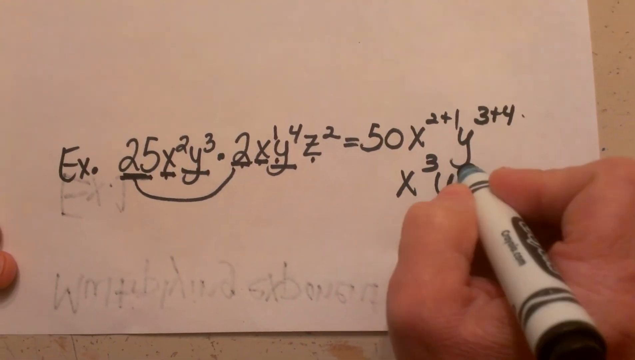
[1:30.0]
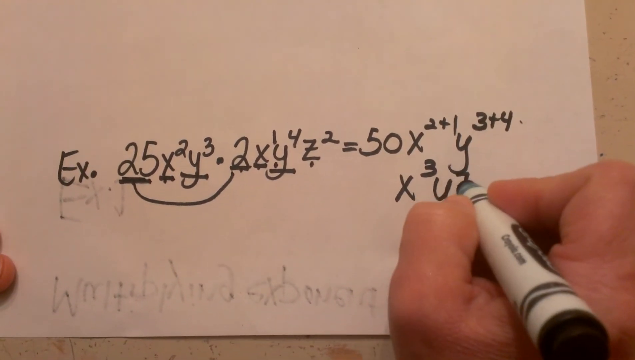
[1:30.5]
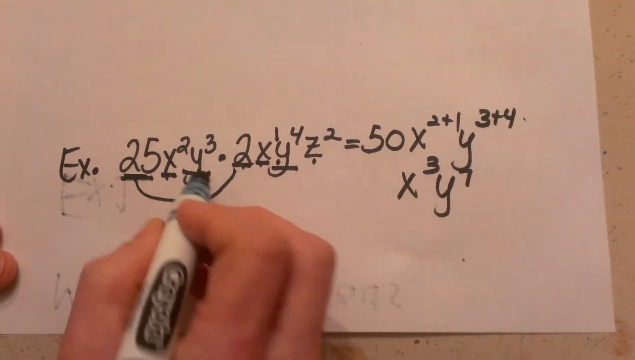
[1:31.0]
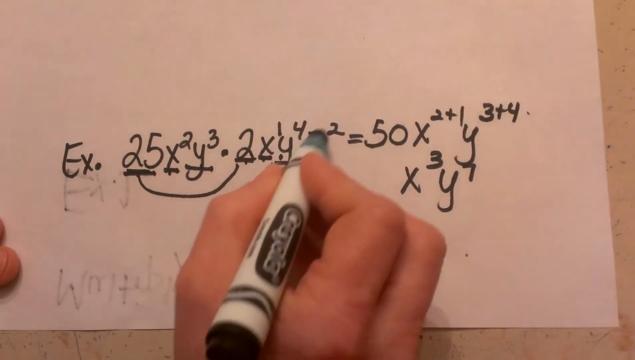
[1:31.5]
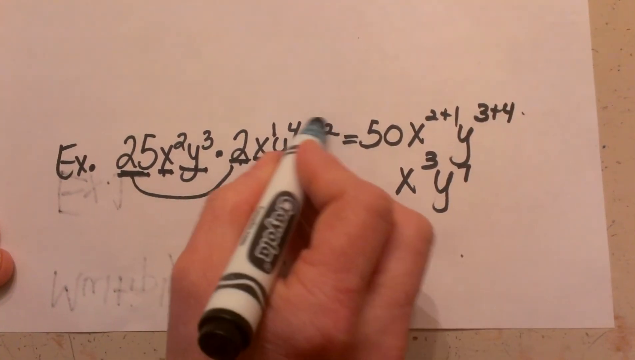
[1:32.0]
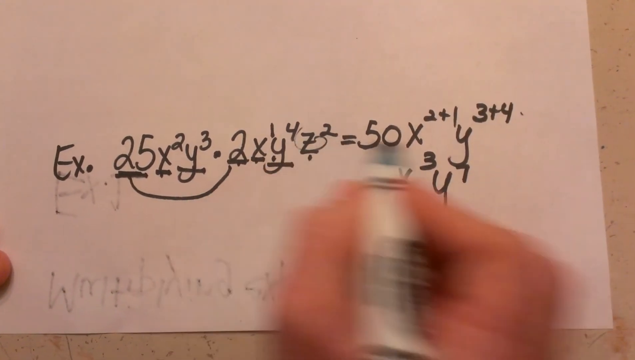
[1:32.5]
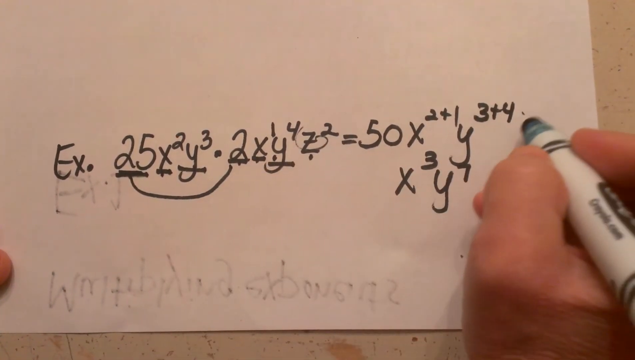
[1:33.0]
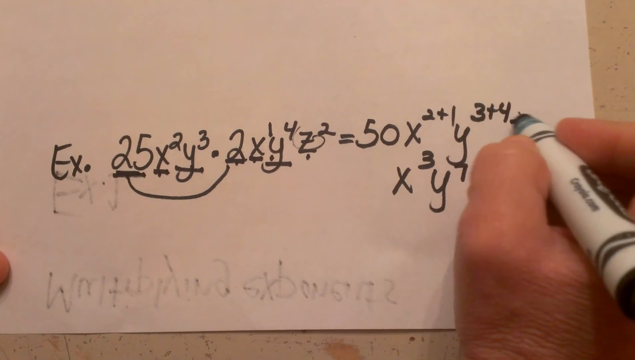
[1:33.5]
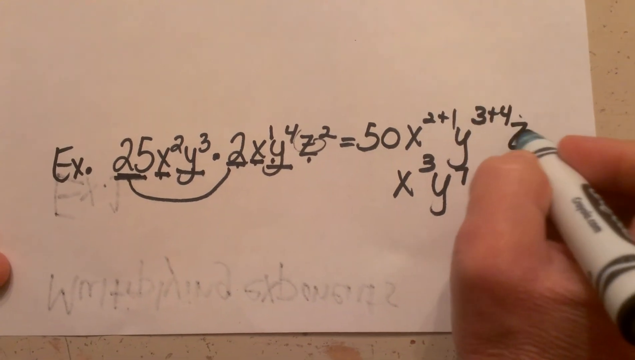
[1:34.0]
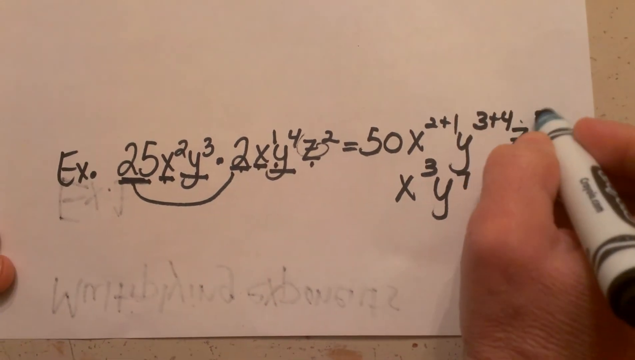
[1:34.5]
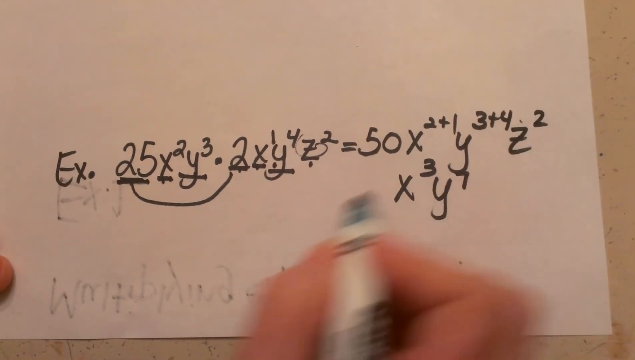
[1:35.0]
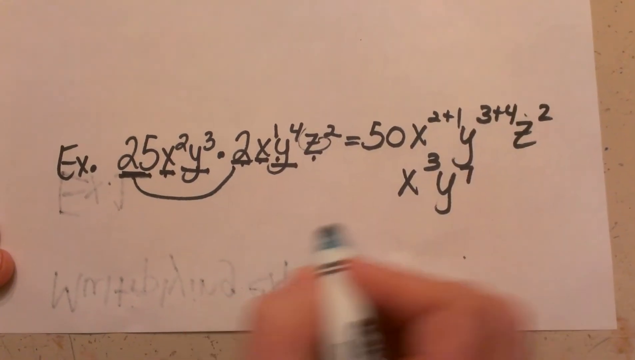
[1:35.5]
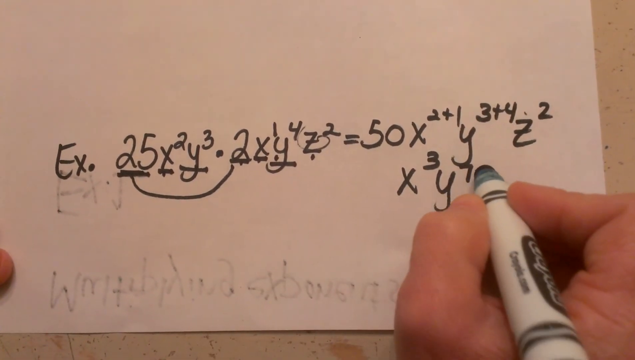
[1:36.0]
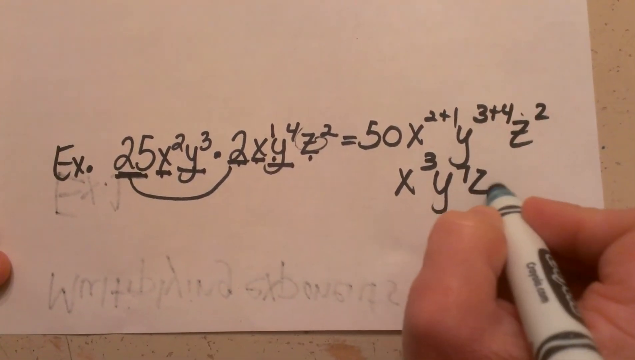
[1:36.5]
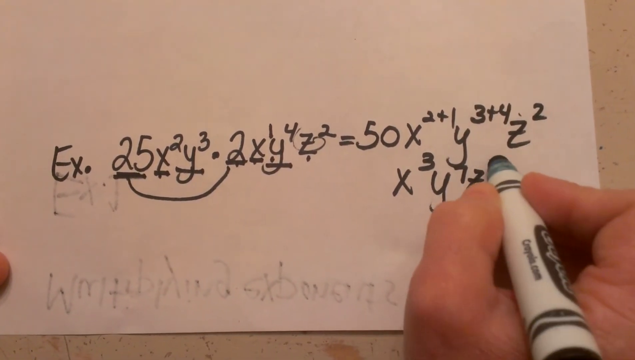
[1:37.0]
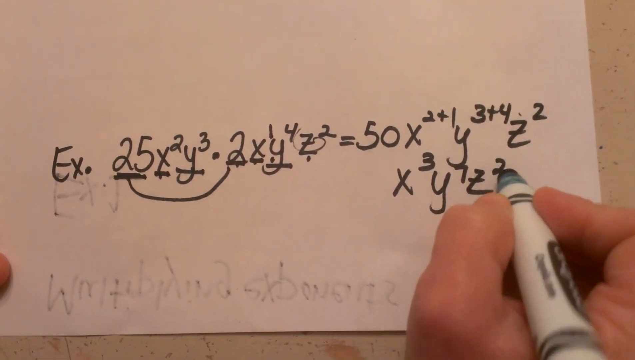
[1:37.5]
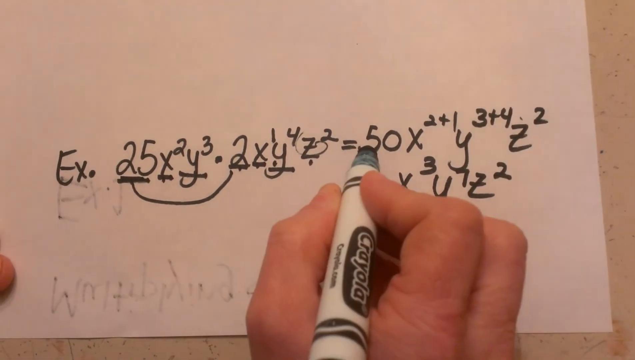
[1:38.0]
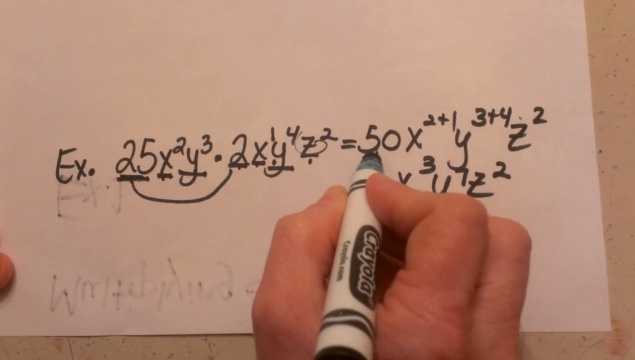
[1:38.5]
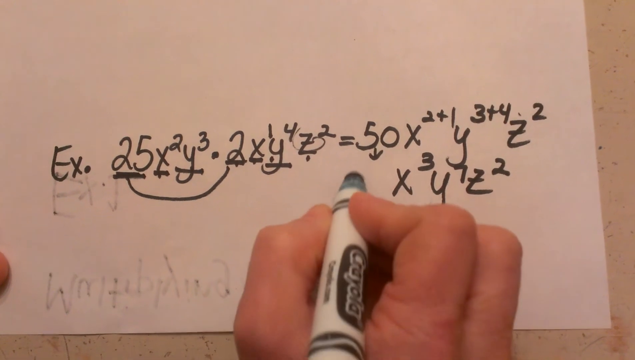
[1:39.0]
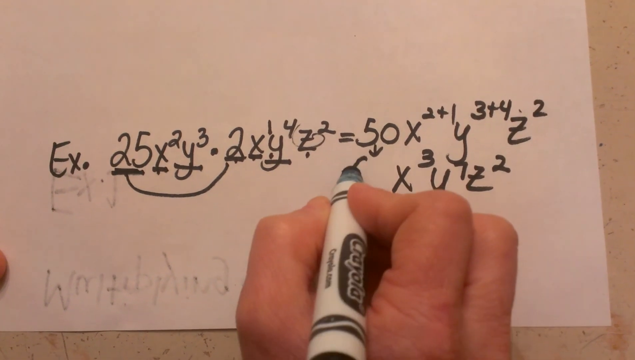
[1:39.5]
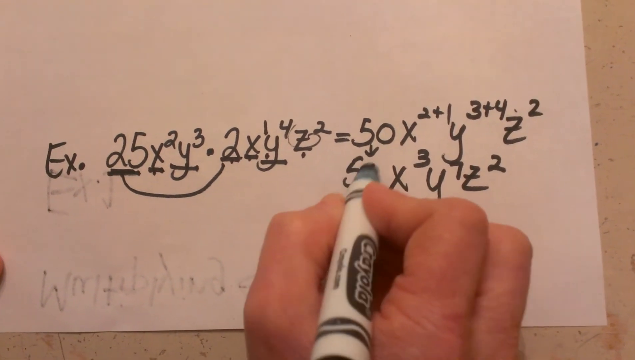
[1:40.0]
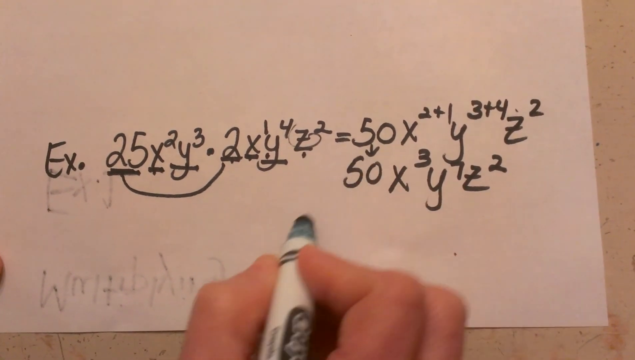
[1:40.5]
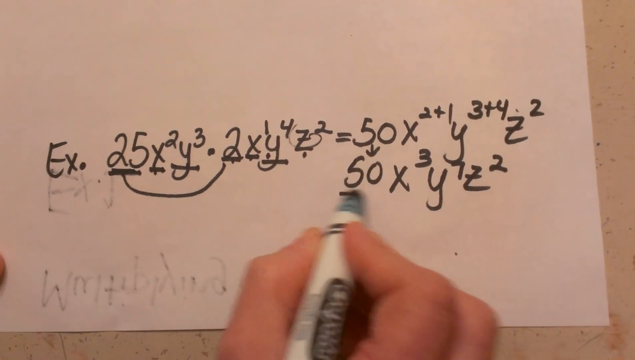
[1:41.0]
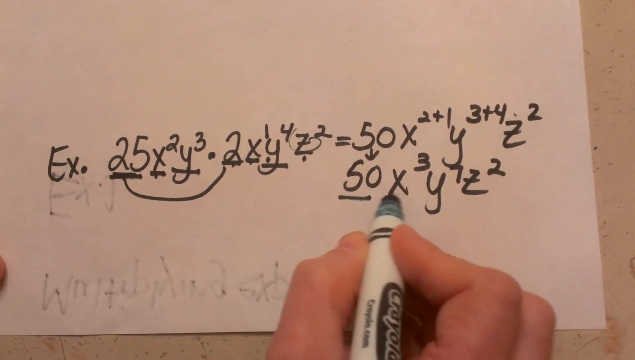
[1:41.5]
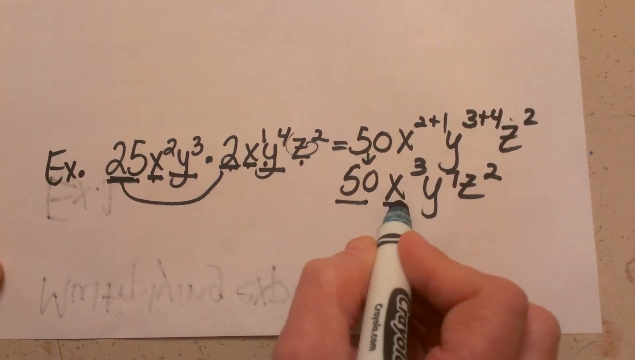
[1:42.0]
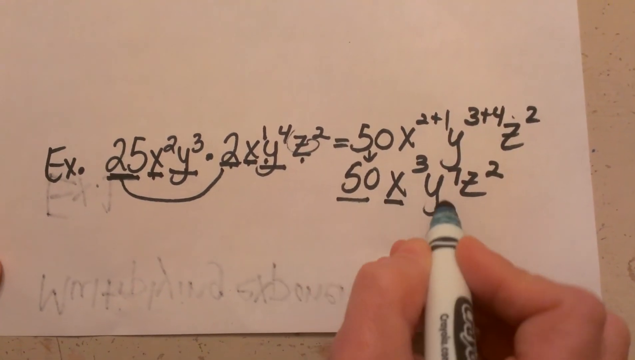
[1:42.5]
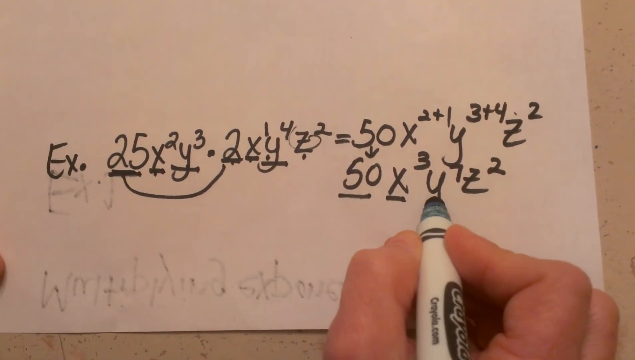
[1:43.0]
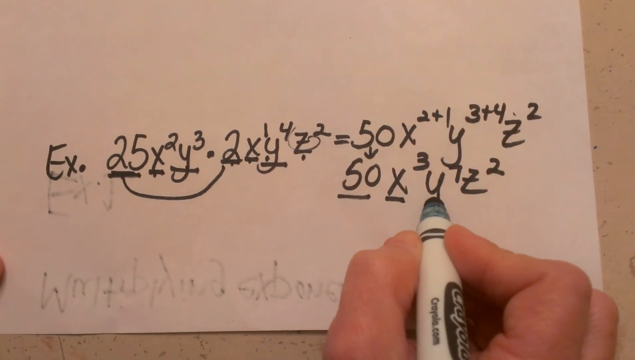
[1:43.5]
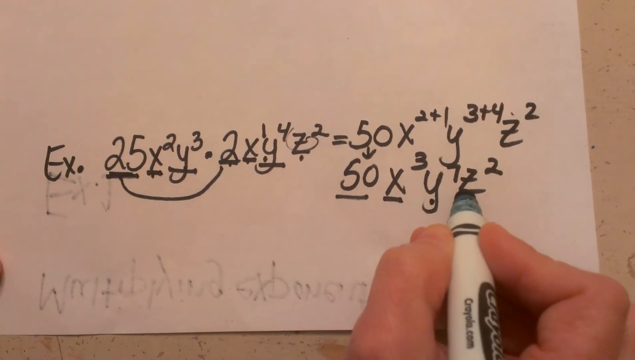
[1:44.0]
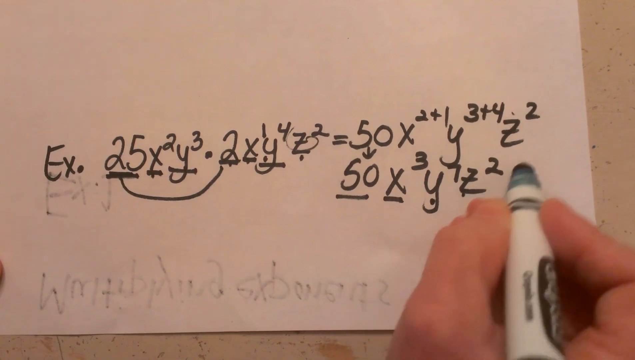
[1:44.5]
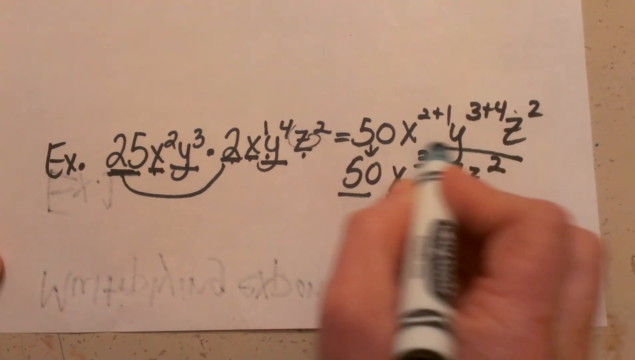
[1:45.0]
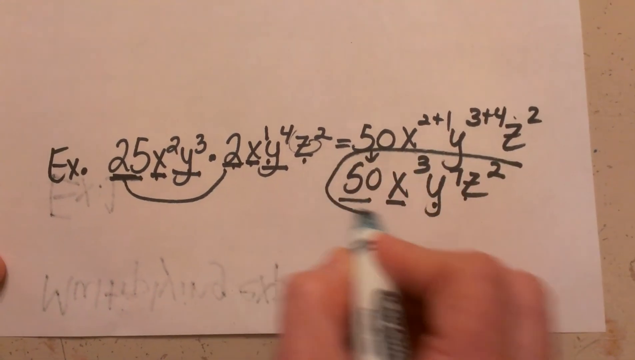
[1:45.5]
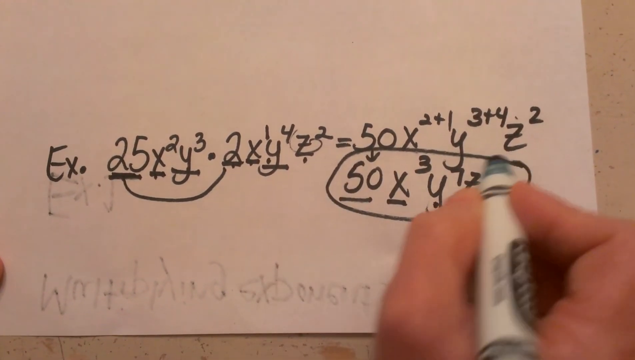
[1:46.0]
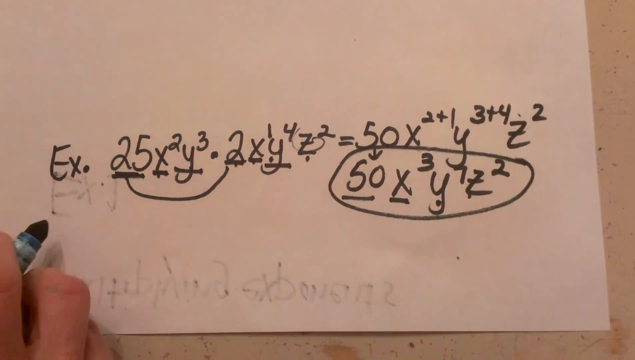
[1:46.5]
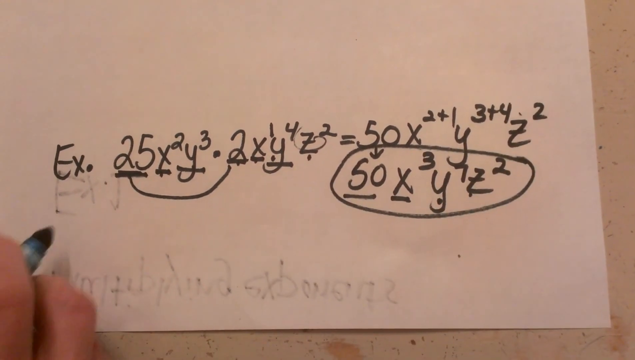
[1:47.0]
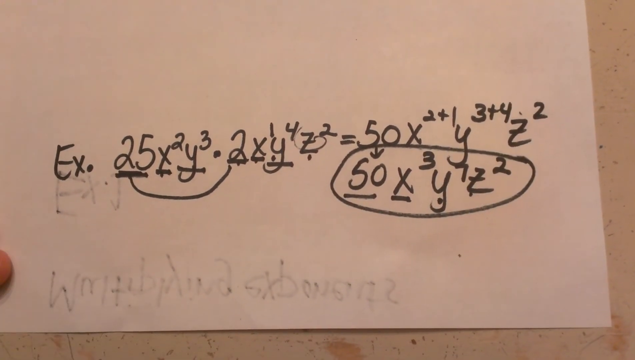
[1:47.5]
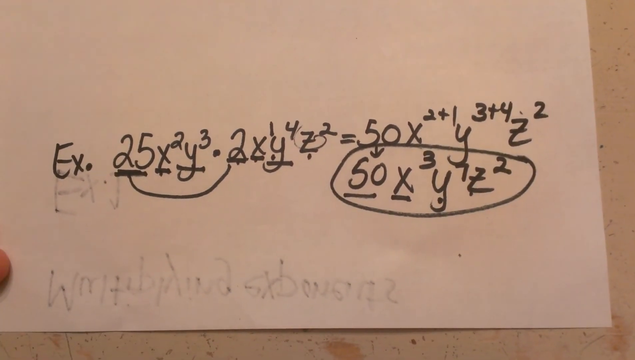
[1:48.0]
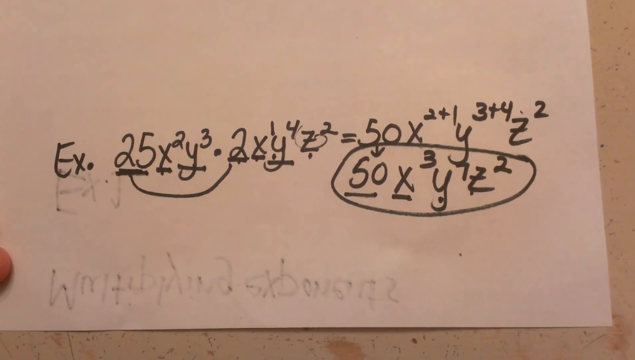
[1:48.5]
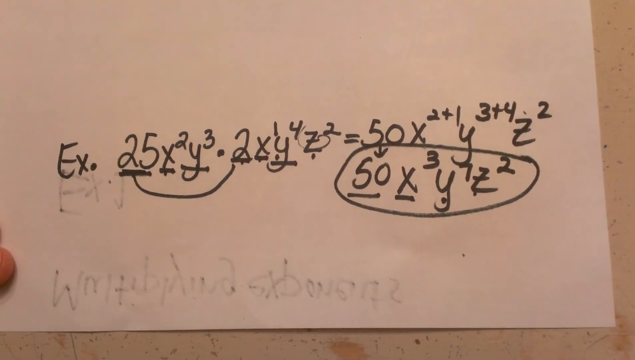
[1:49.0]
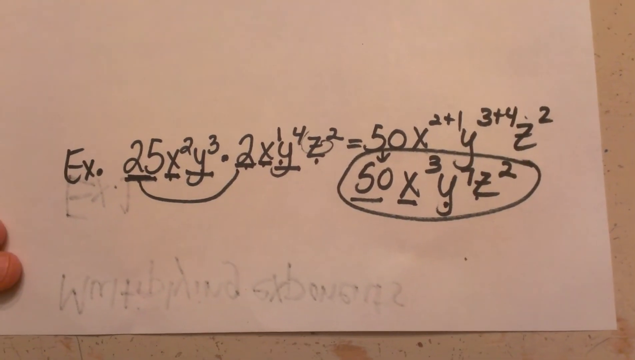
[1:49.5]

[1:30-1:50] The result y exponent 7 is on the screen after the y exponents are added. There is z exponent 2, and no other z on the left-hand side, so it stays raised to the power 2. The final answer to the second example is 50x exponent 3 y exponent 7 z exponent 2.